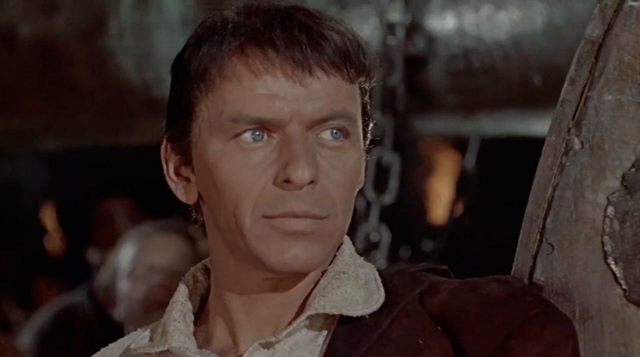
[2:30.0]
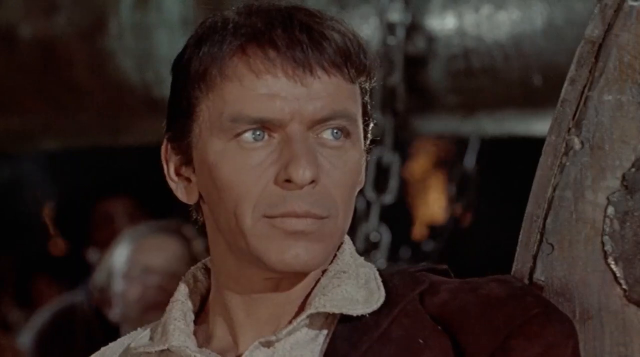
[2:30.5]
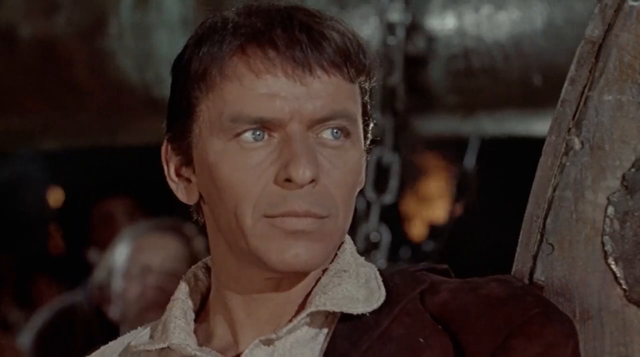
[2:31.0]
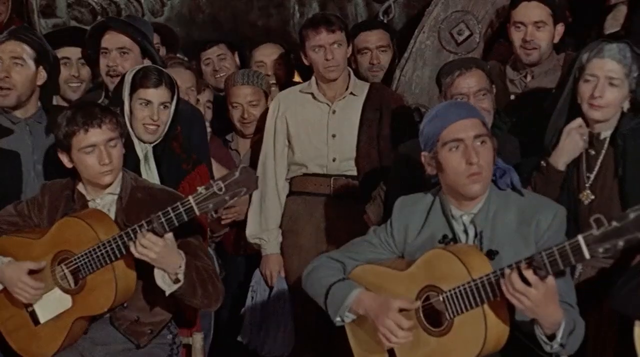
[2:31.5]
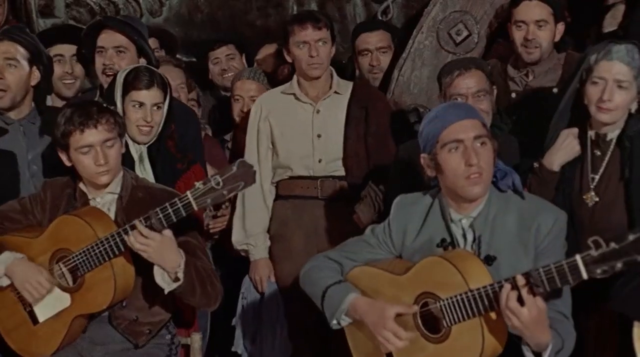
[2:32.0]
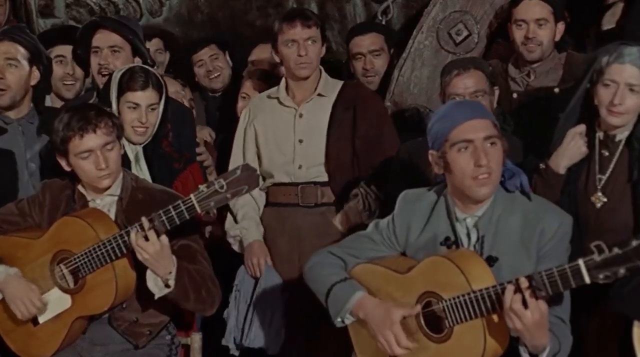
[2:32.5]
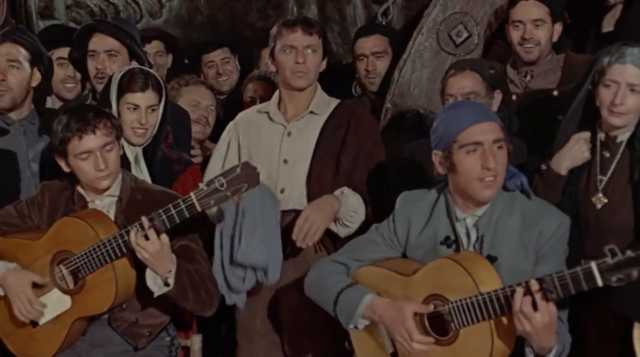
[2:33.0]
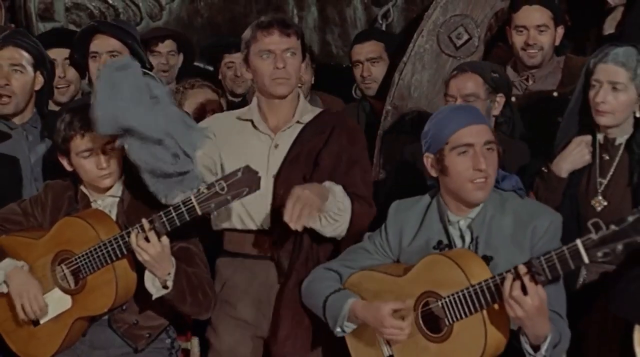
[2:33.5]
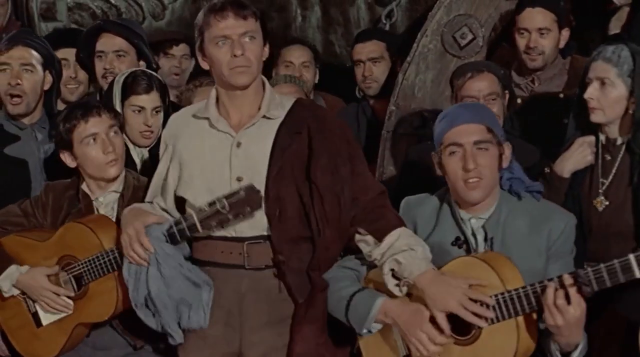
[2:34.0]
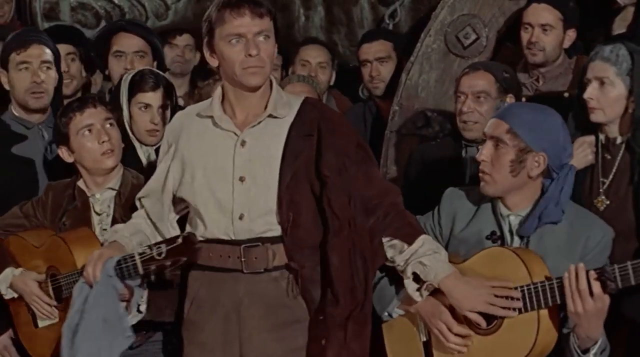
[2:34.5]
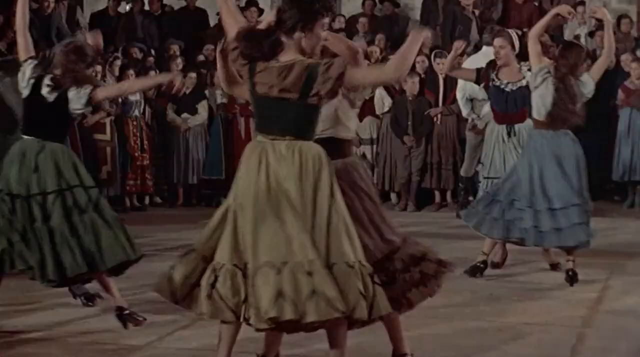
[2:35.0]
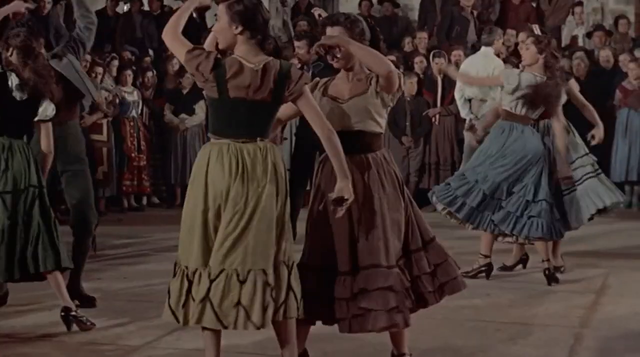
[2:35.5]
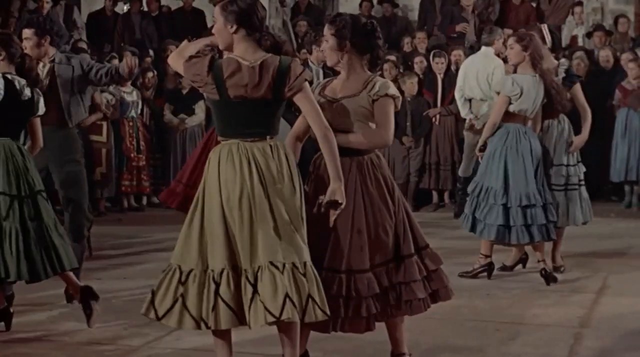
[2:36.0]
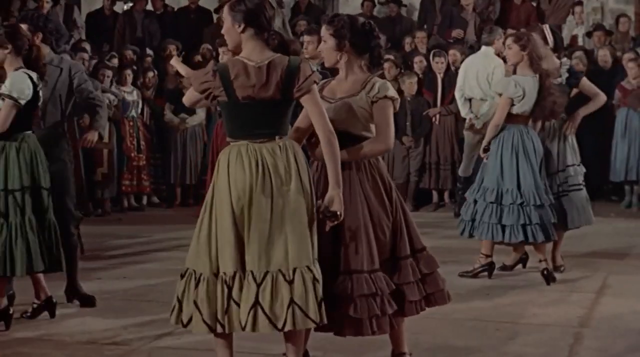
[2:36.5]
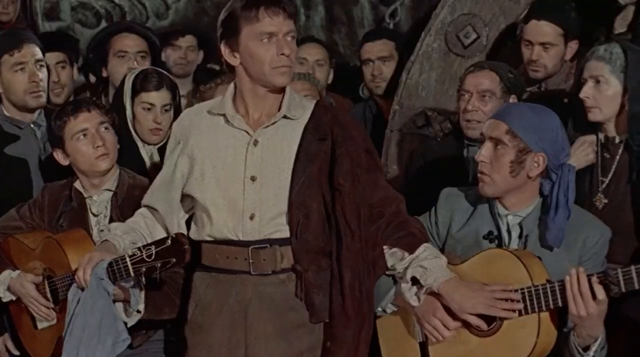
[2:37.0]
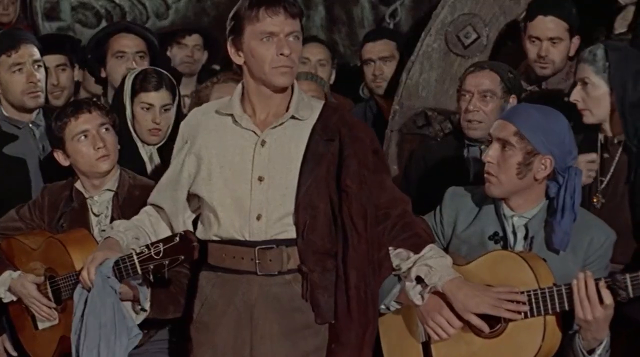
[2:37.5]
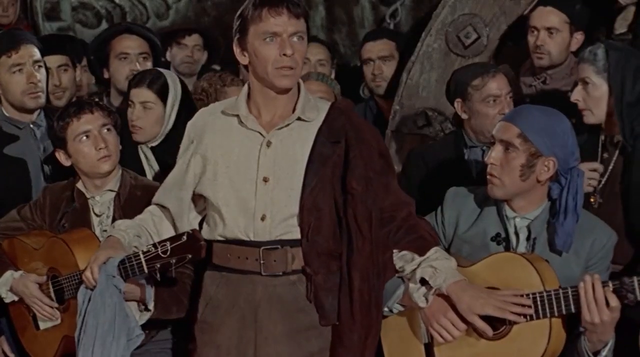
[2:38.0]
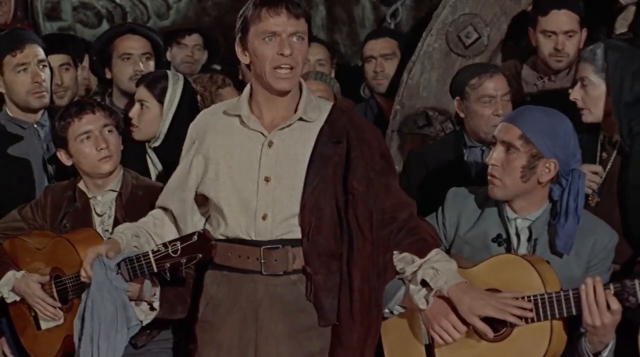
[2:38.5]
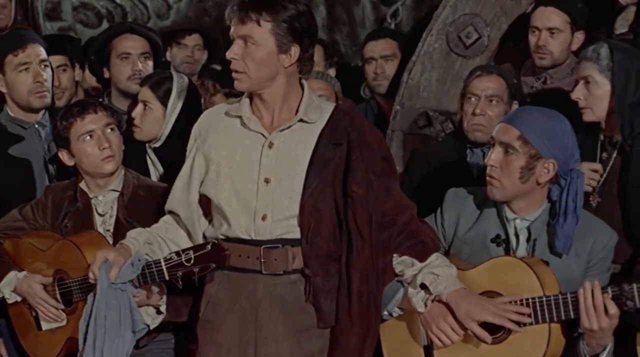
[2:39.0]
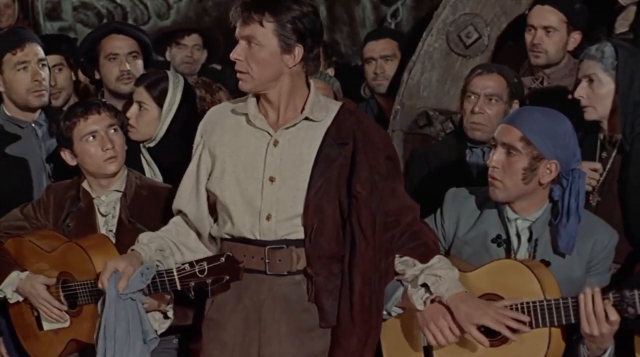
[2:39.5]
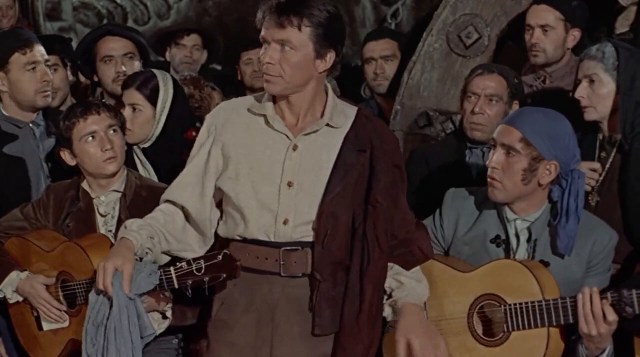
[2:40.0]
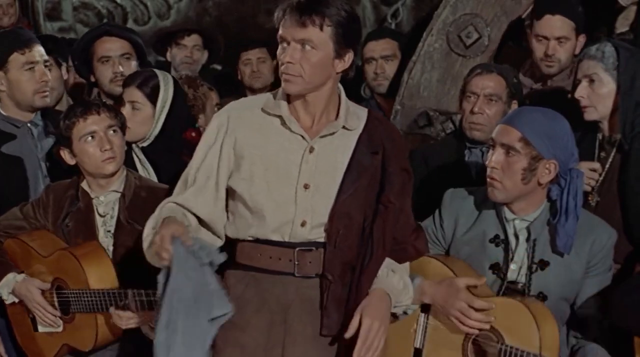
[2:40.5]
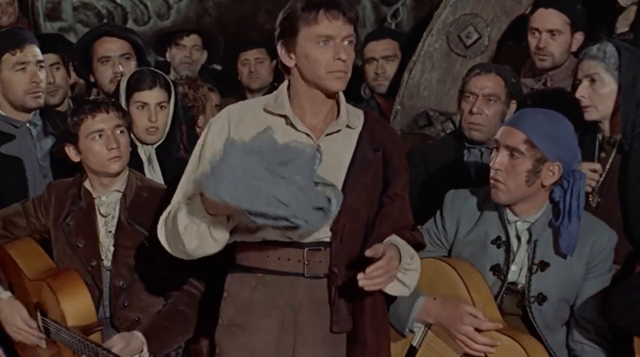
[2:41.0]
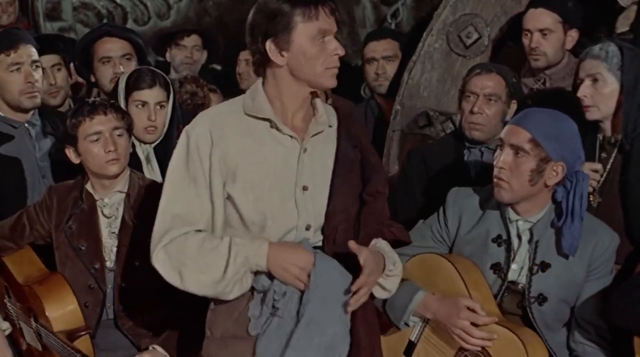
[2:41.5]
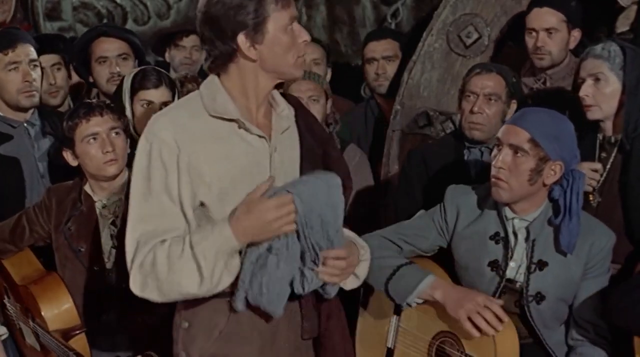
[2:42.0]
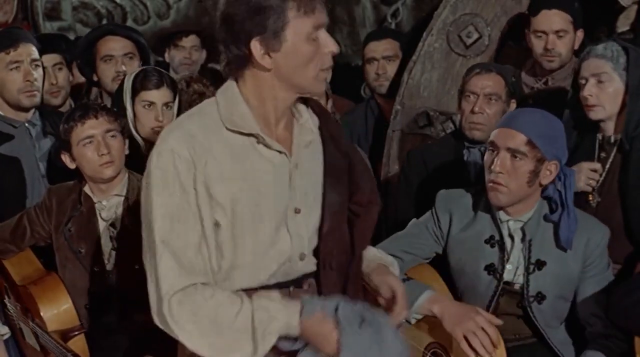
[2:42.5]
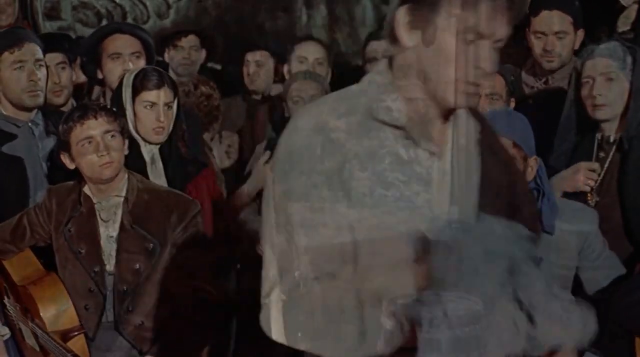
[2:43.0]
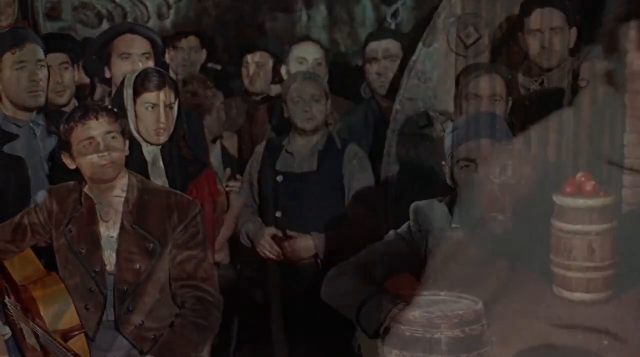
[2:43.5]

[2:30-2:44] The dancer's partner still looks very angry. He has his jacket over one shoulder and, in the other hand, the woman's blue shawl, which he took at the beginning. He steps forward, puts the shawl over the neck of one of the guitars and puts his hand on another guitar. There are apparently four guitars in all, and he stops two of them playing. The music stops abruptly, and the dancers stop and look confused. He says something and looks very angry.